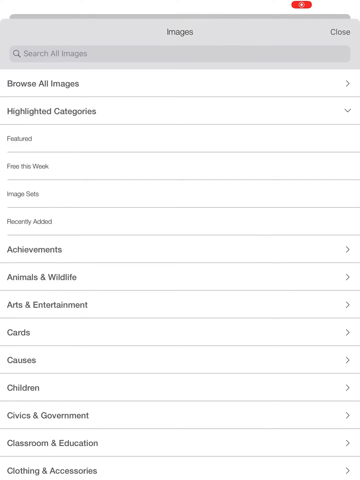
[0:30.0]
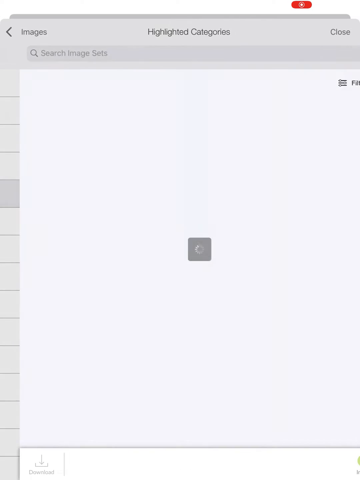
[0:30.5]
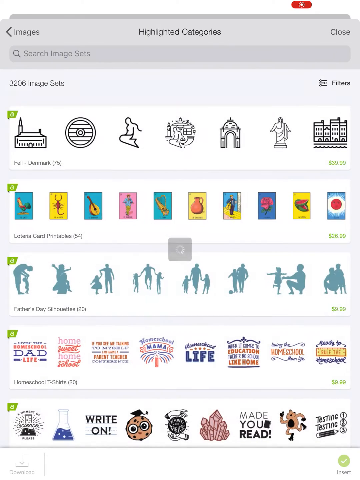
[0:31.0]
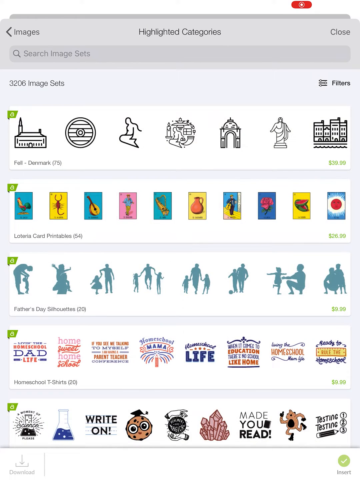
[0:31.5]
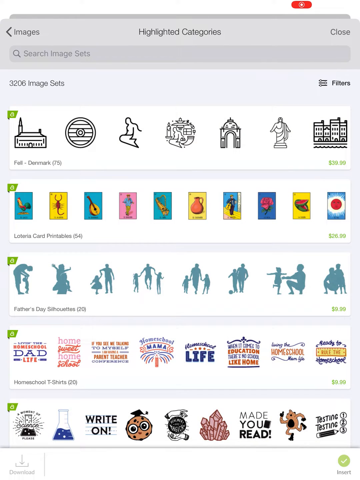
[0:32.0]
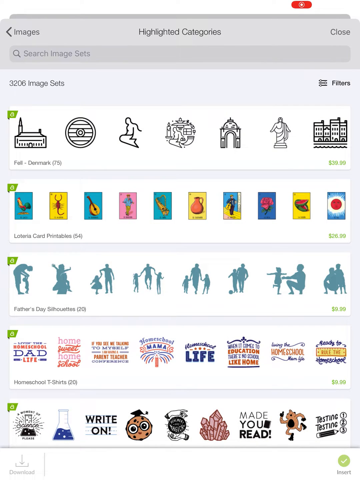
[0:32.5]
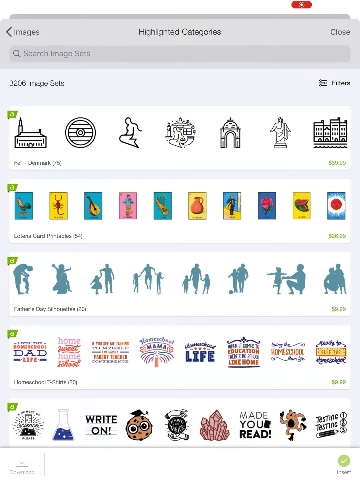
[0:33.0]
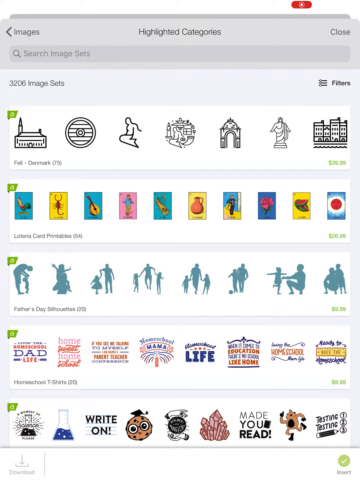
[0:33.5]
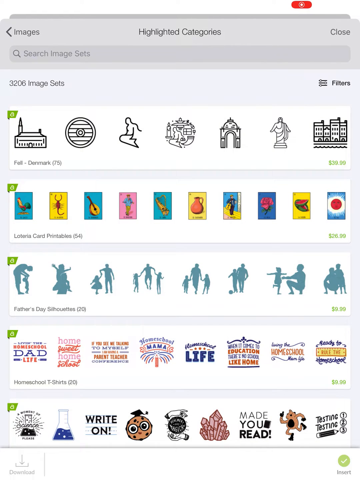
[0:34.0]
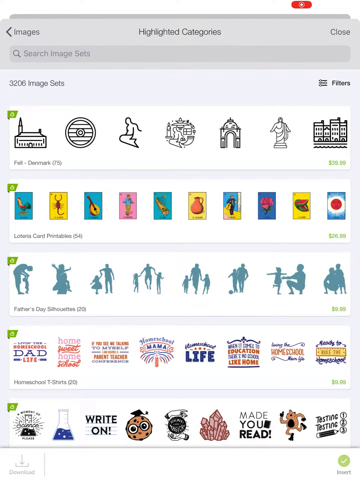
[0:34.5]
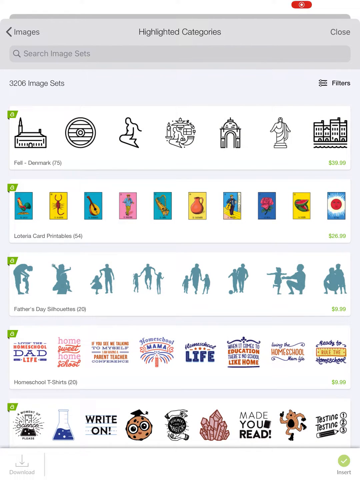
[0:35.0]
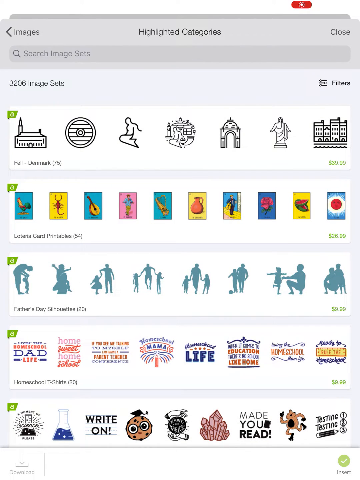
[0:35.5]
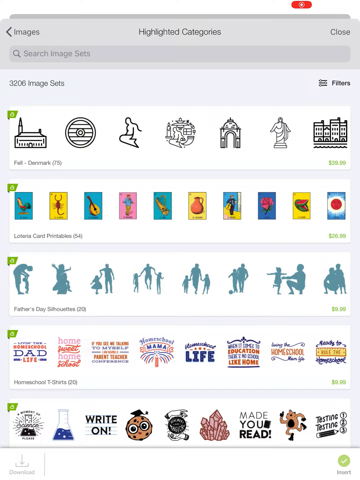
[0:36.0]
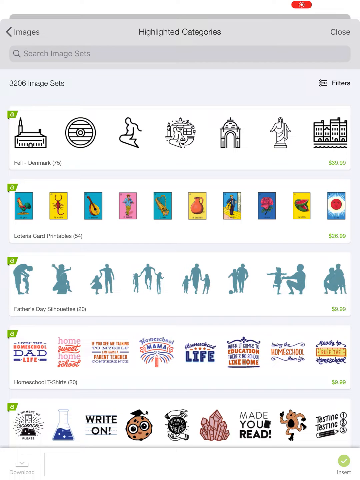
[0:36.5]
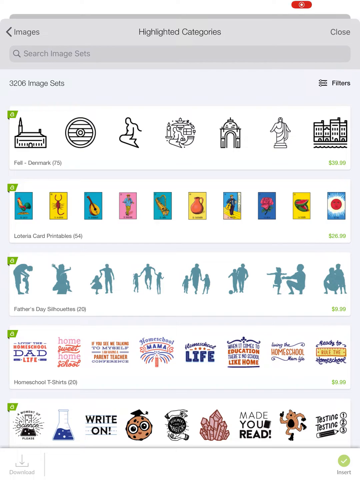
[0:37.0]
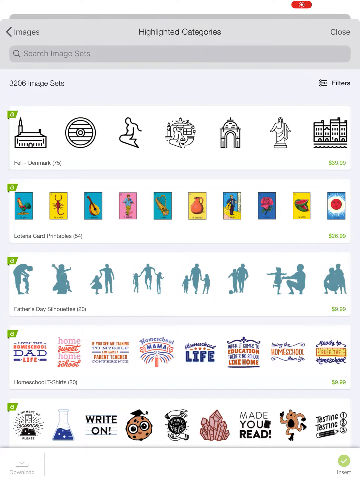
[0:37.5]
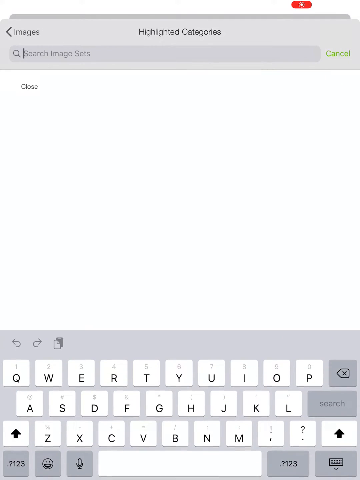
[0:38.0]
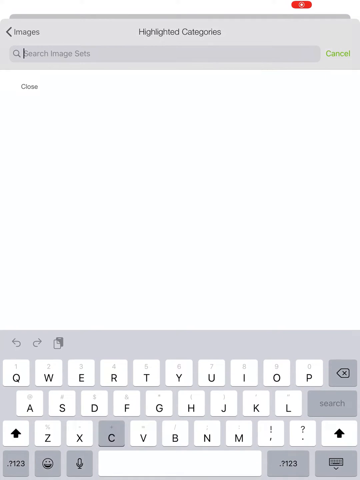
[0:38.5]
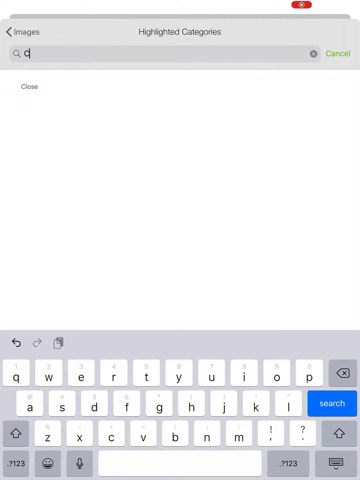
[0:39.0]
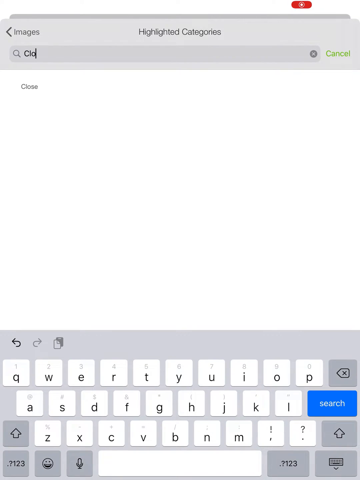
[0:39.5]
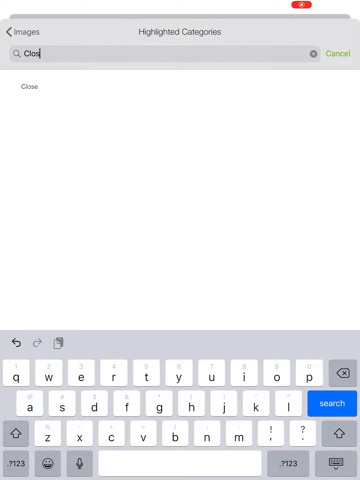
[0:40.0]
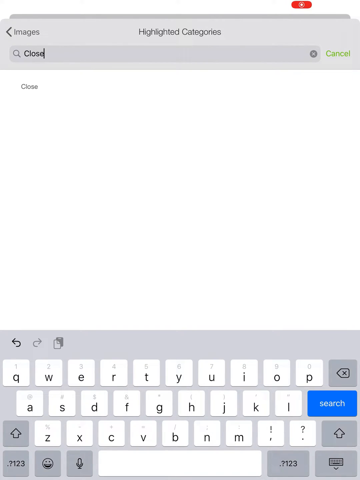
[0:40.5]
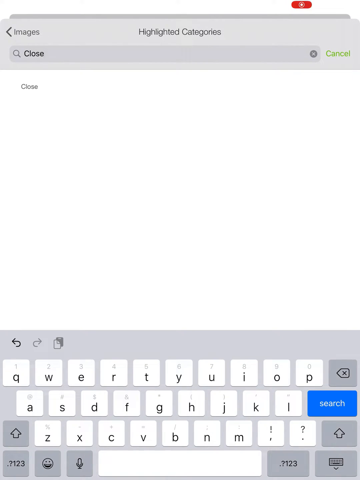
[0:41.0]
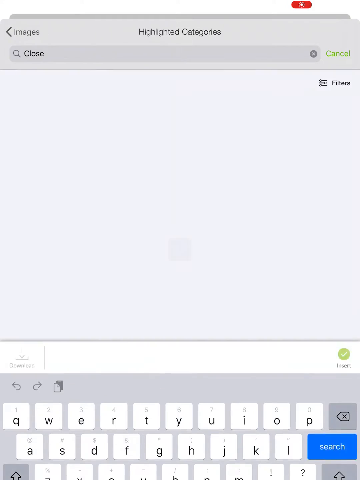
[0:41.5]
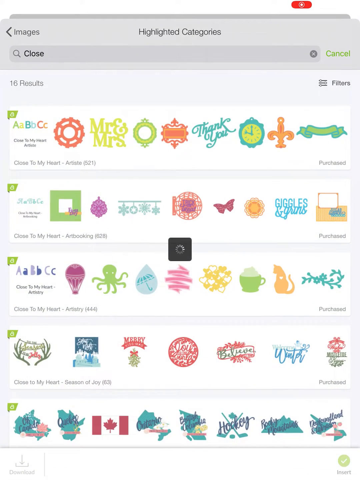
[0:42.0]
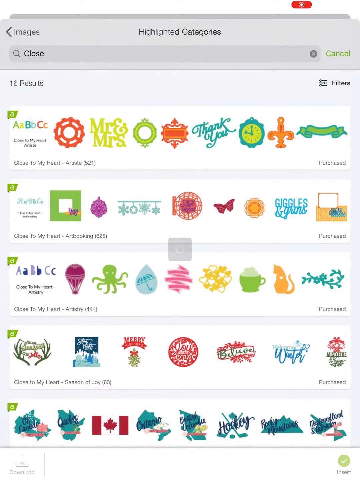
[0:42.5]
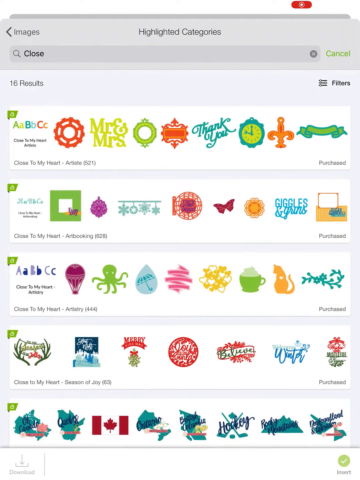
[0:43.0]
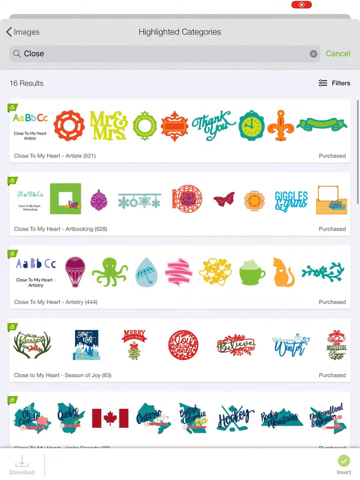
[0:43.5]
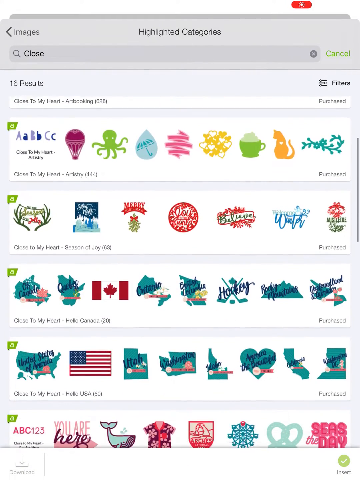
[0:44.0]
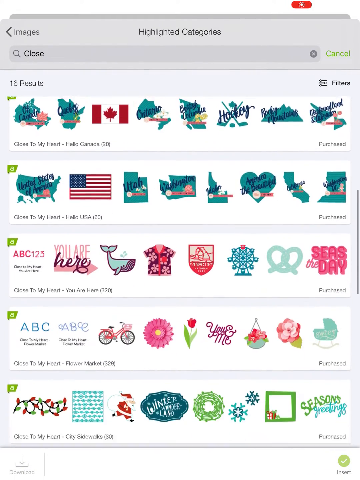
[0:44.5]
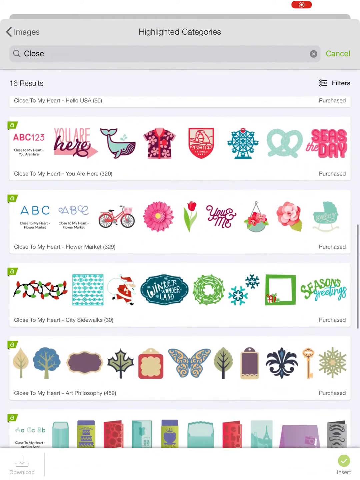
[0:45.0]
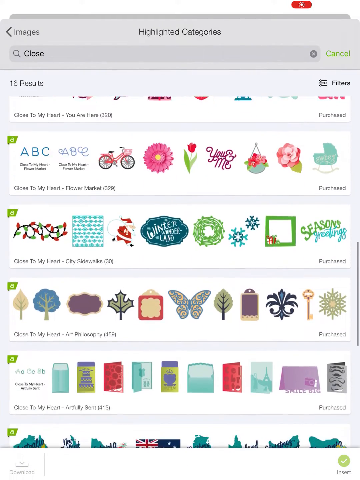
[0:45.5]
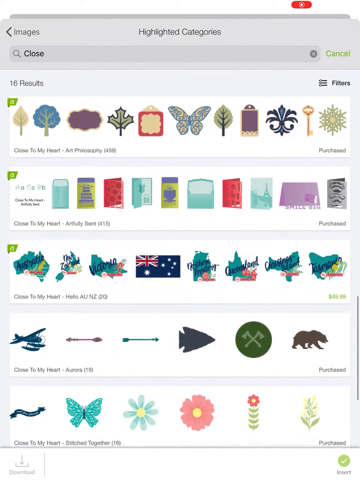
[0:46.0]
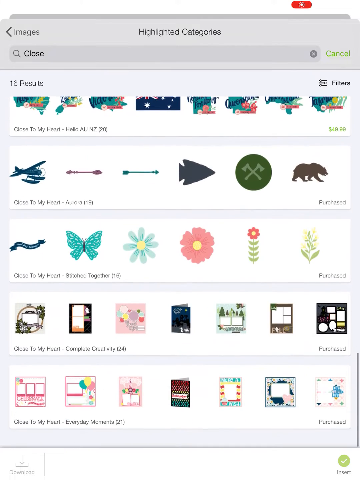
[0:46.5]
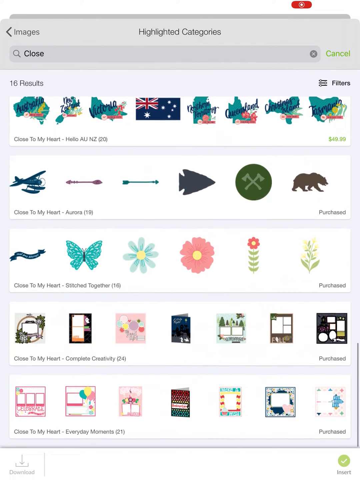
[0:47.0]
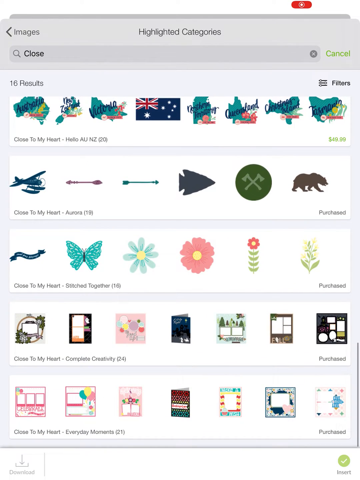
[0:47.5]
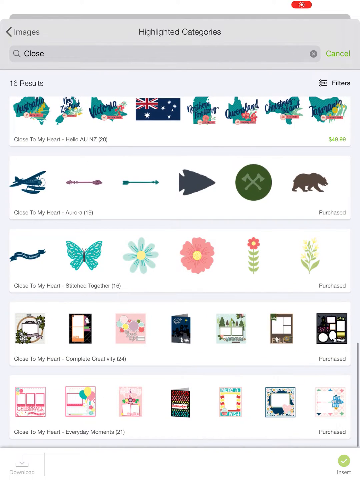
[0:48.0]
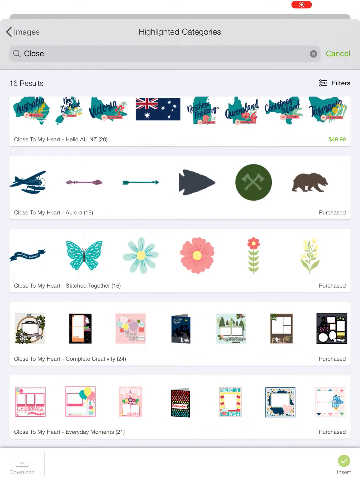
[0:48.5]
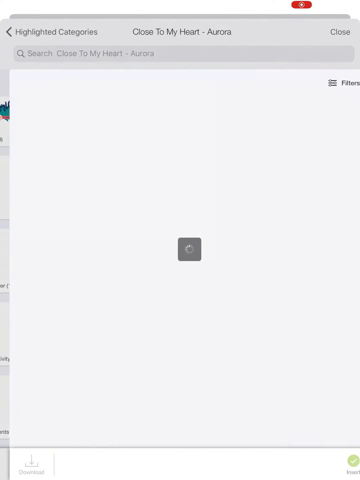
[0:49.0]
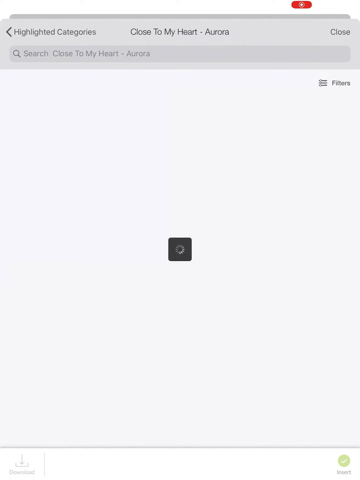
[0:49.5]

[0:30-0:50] The screen of a mobile device shows image options. From top to bottom they include browse, all images, highlighted categories, achievements, animals and wildlife, arts and entertainment, cards, courses, children, civics and government, and several other image options. The screen then changes to show images, with the title "highlighted categories" at the top. At first there are five rows of images, including silhouettes of humans and other vector images, along with some colorful images. The bottom row, from left to right, includes a science image, a beaker, and a round yellow head with eyeglasses wearing a graduation hat. There are also quotes, as well as images that look like statues, houses and buildings.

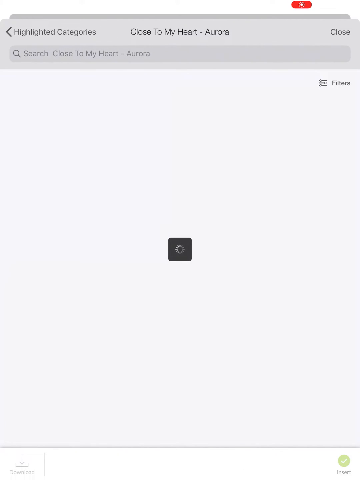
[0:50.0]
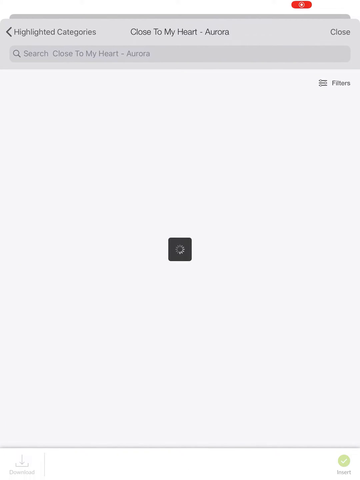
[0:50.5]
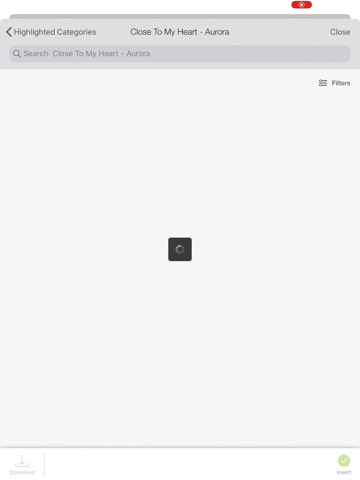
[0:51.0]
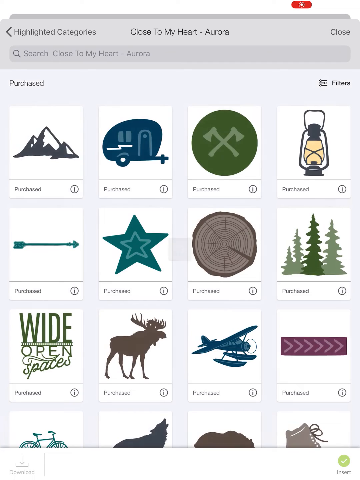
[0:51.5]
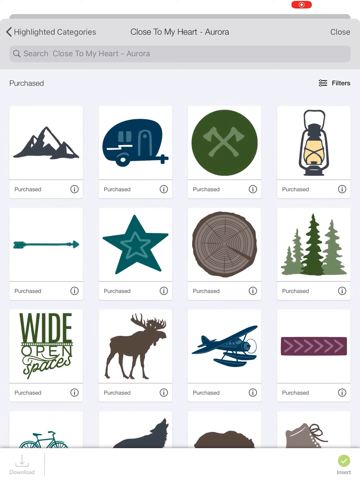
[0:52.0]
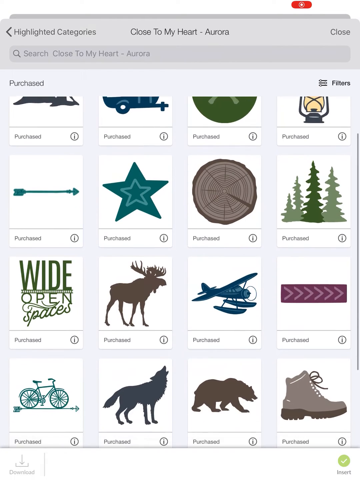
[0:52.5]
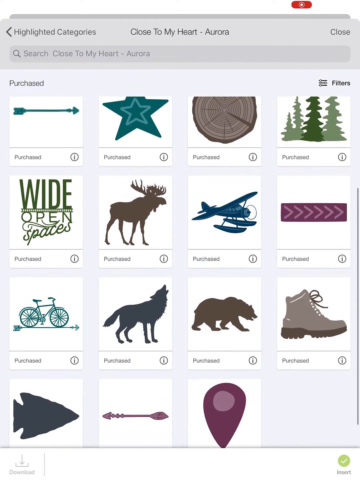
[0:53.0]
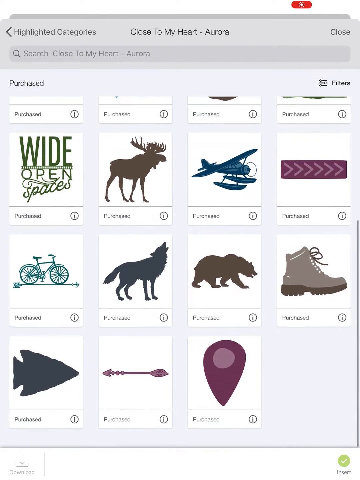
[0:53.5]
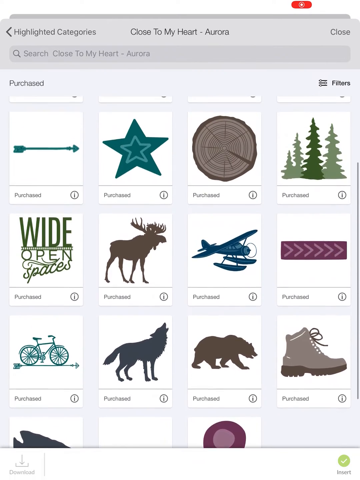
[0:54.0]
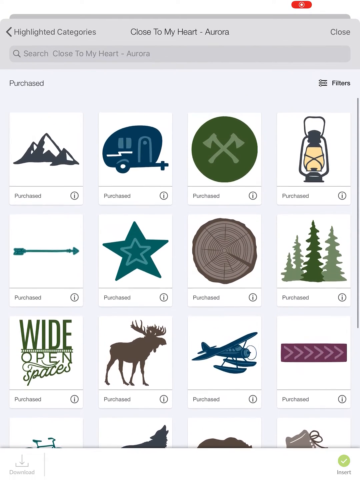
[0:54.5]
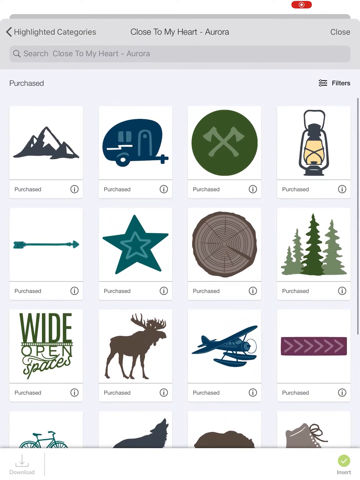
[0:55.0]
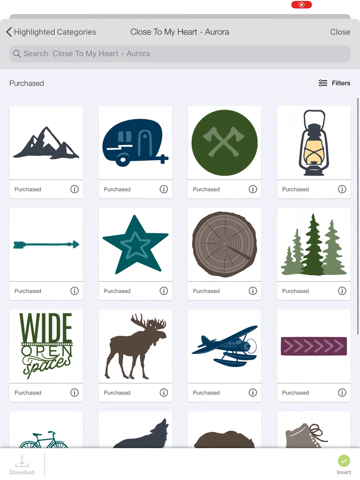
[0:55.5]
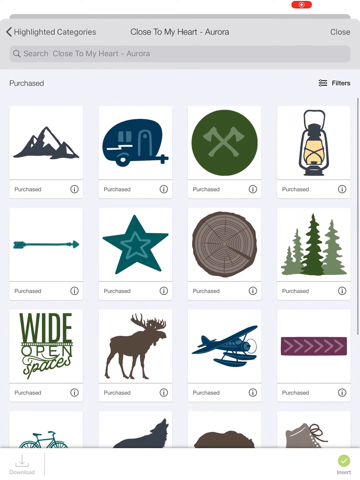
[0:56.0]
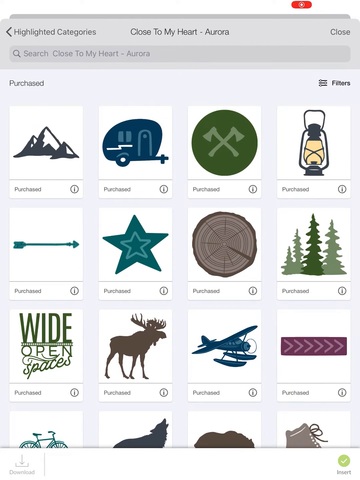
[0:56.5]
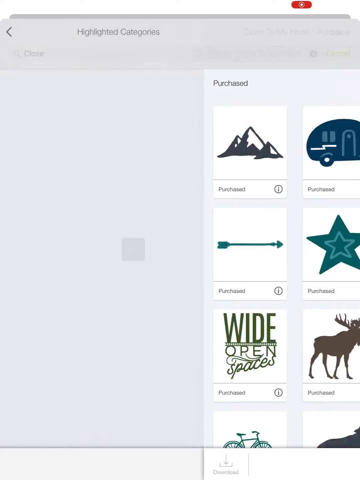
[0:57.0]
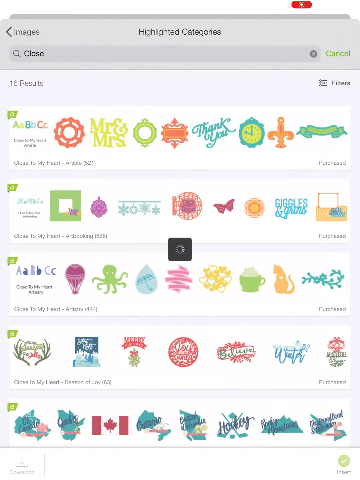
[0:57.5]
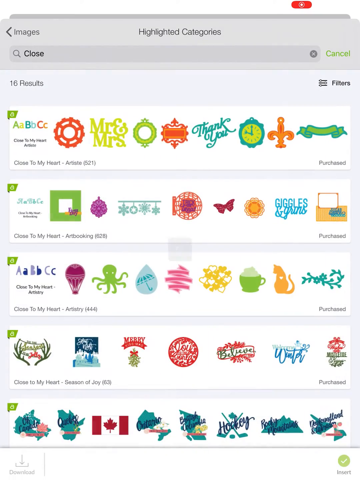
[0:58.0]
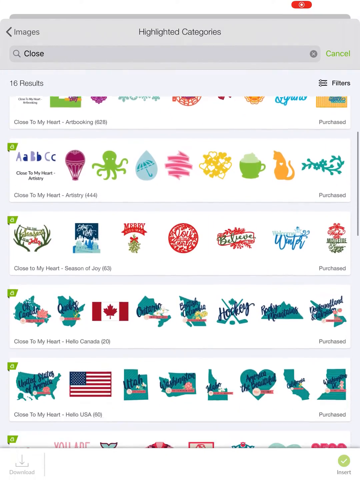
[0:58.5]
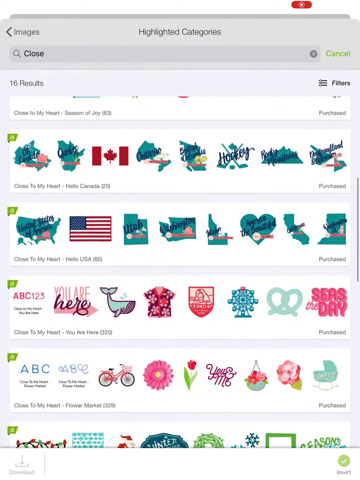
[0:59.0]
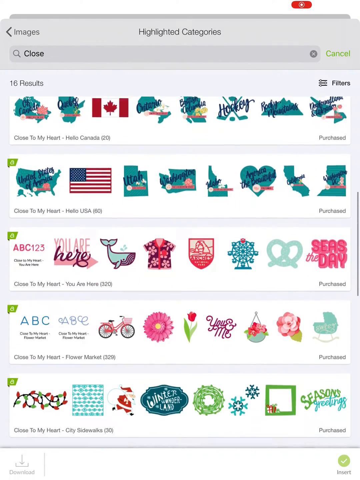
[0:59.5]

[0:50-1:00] The screen of a mobile device shows images arranged in four columns. From left to right there are a mountain, mountain peaks, a camp trailer, a lantern, arrows, more trees, a large moose, a wolf, a bicycle, an airplane, a bear, shoes, and hiking boots. The screen scrolls down to show an arrowhead and an arrow, then scrolls back up, and a different set of images pops up. These images are colorful, in pink, green, blue and yellow, and the bottom row includes a Canadian flag. The images scroll further down, revealing more rows: one row has an American flag, and the row below it includes a whale and a brightly patterned print shirt. The screen keeps scrolling down to reveal more and more rows of very colorful images.